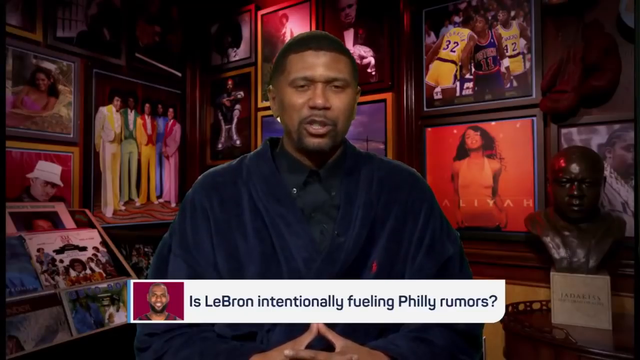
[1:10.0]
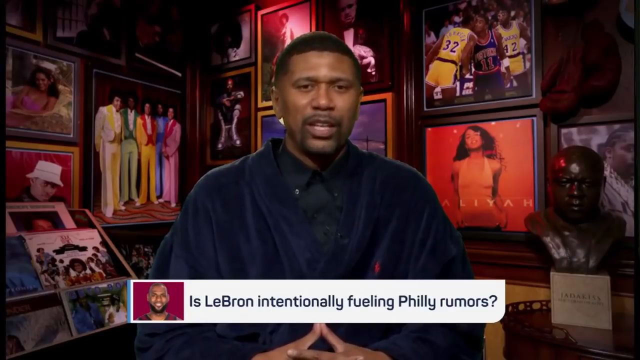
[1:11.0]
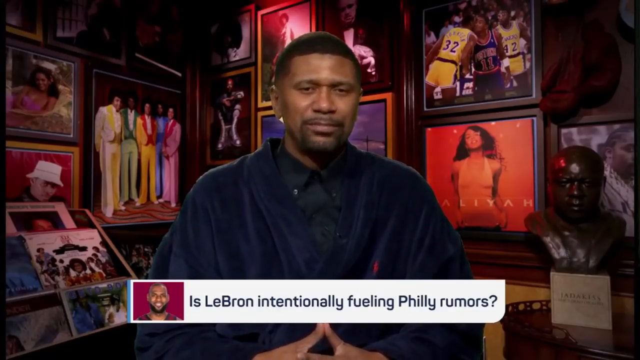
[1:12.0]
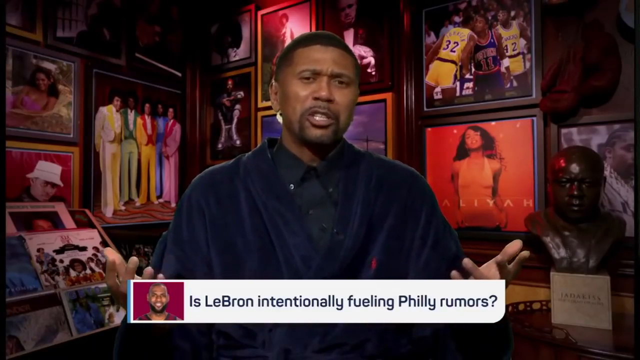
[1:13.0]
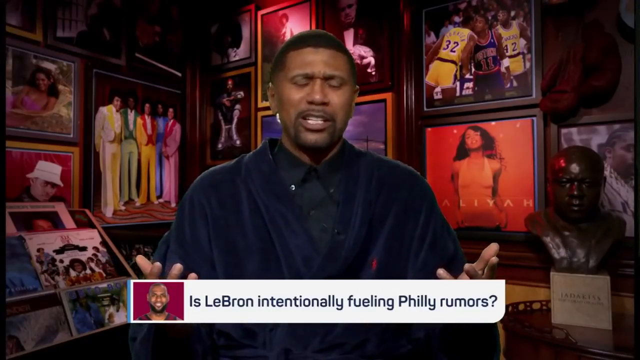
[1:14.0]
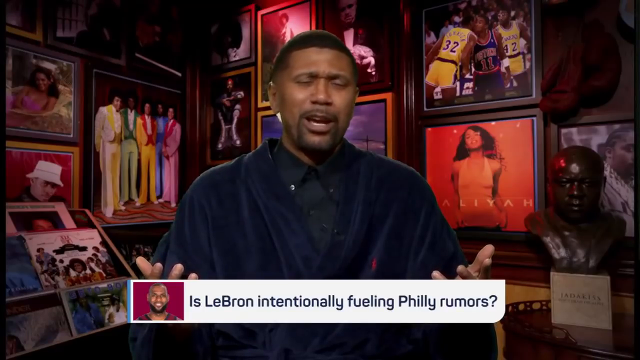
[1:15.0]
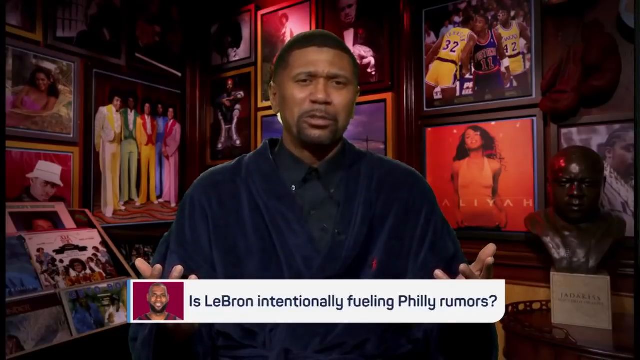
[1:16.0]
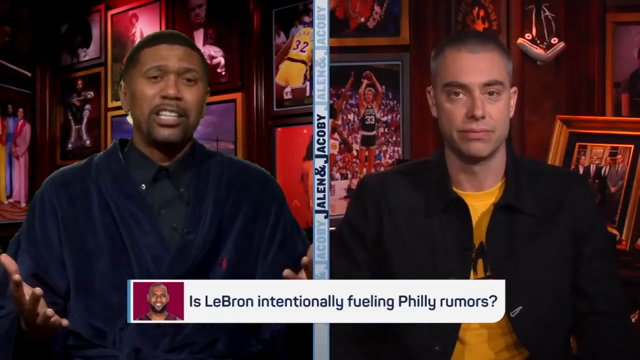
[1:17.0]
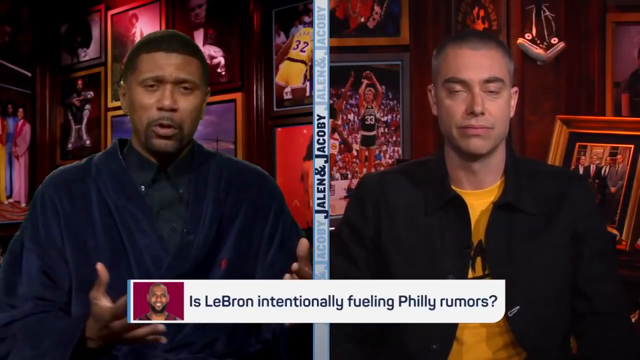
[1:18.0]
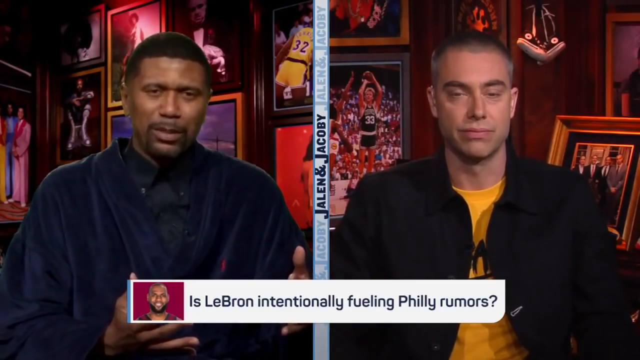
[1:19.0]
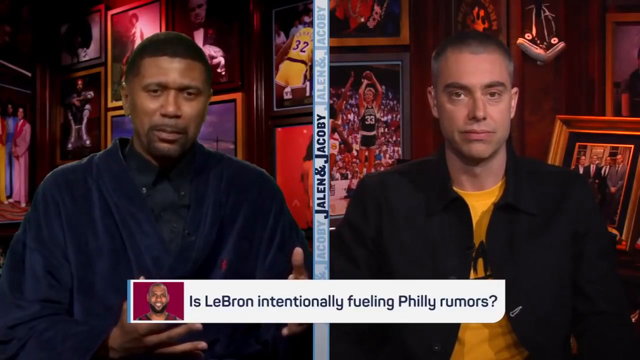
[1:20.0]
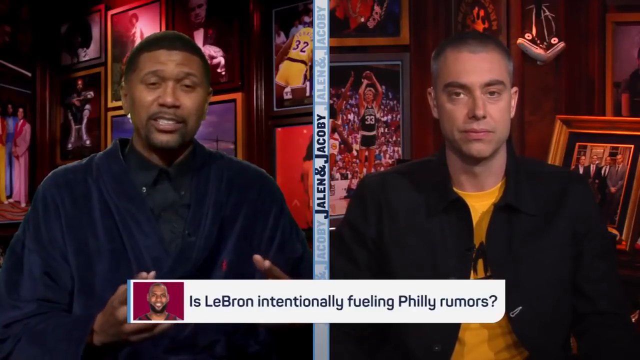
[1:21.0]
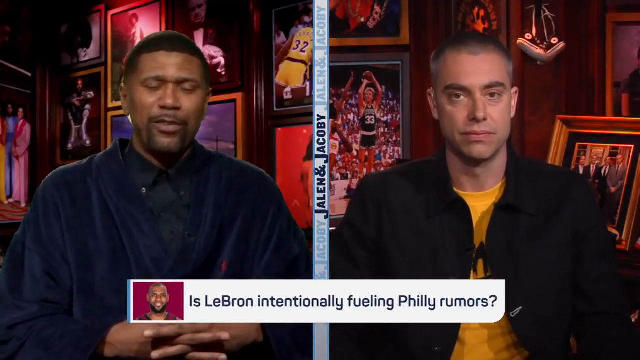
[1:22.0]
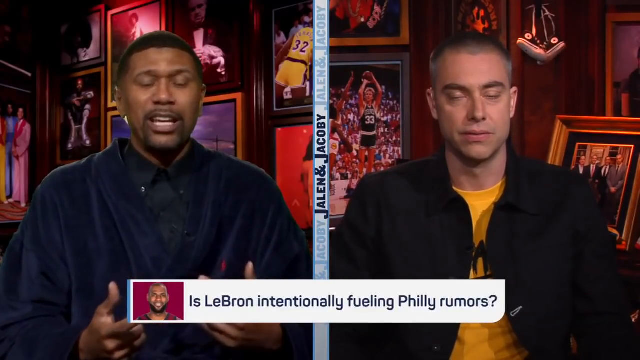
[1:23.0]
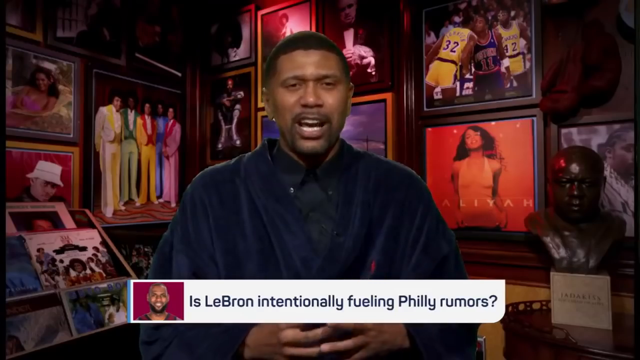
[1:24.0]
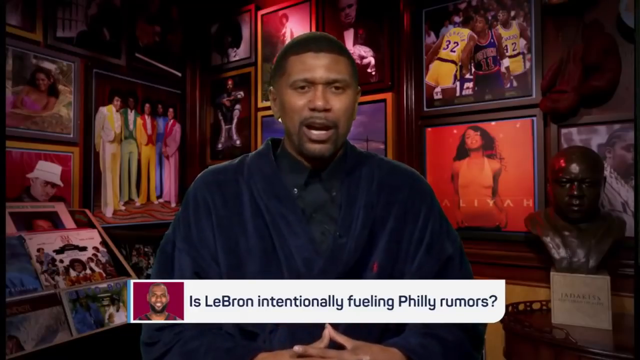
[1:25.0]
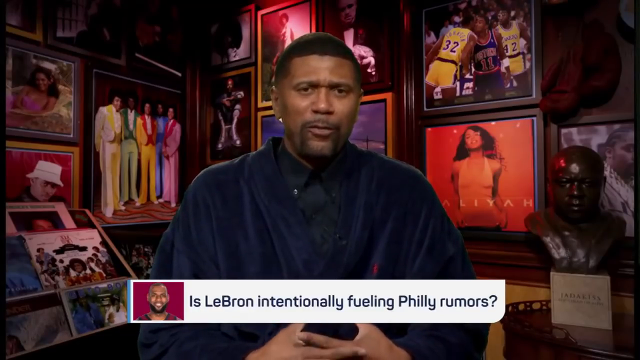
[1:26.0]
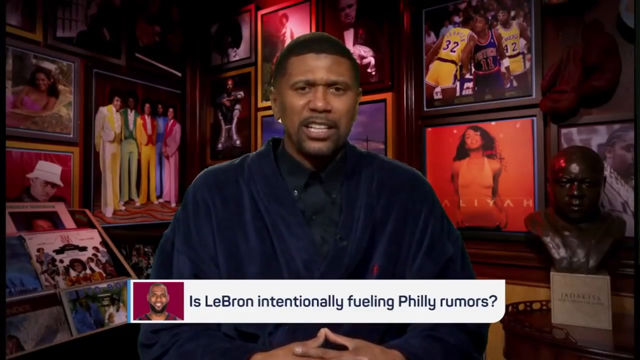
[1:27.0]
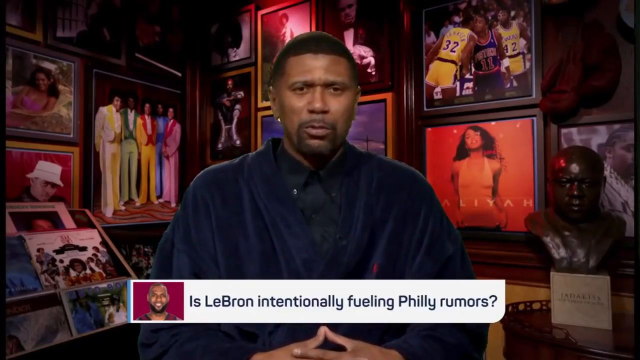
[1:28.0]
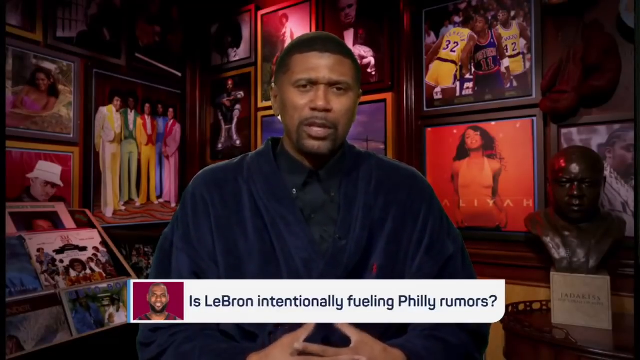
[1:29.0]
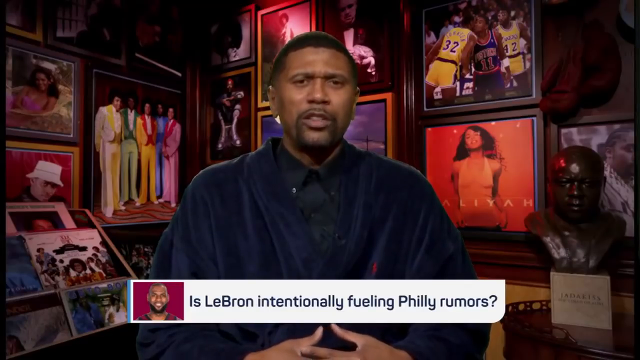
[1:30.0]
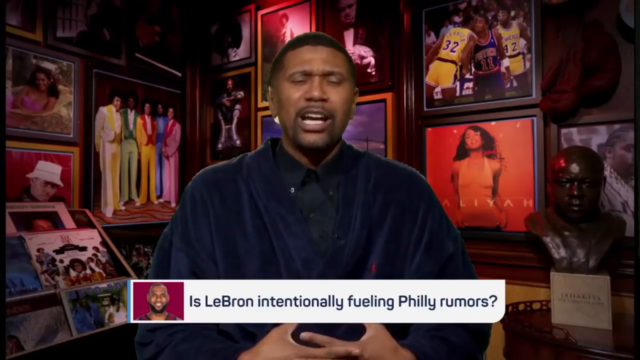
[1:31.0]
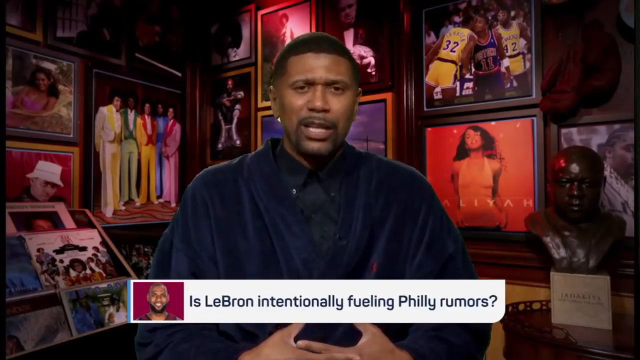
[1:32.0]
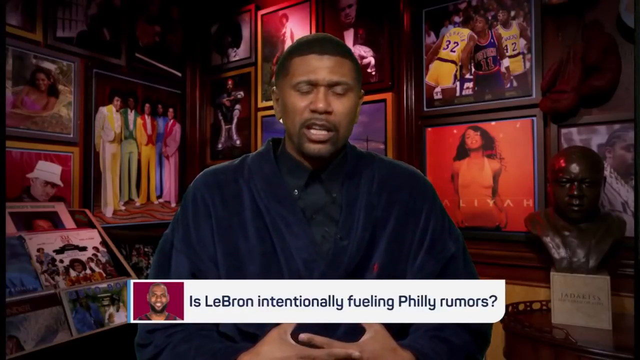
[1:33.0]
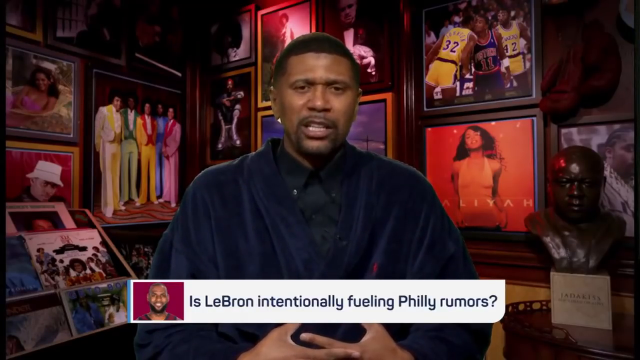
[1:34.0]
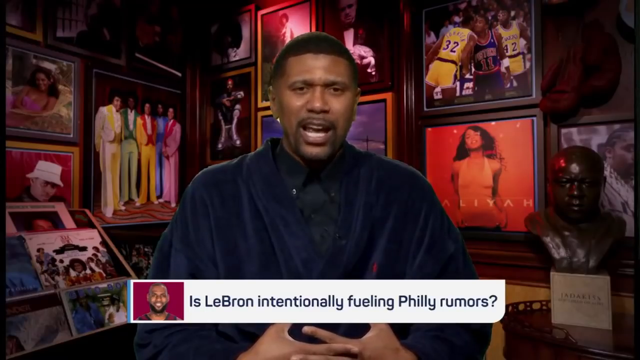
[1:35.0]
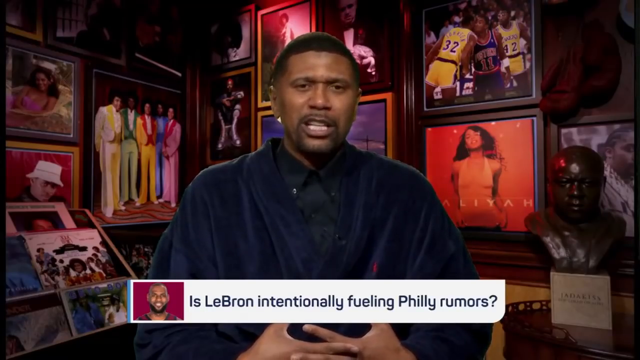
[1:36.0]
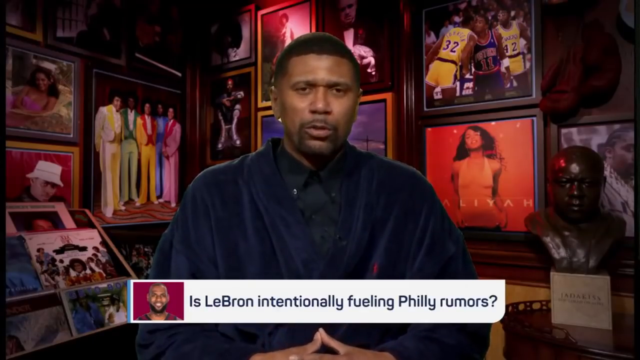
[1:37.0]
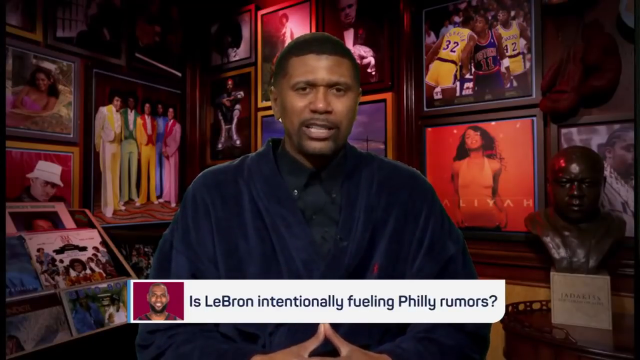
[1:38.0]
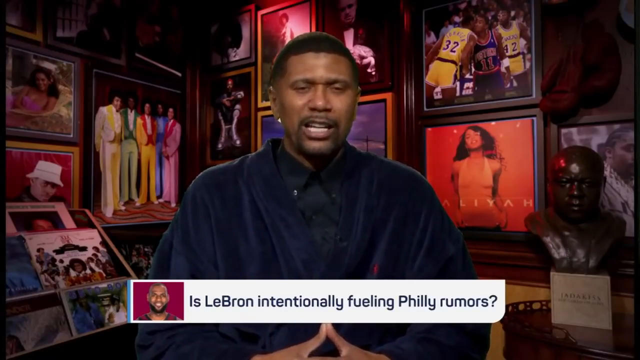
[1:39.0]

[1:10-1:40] Jalen Rose is still in the studio, and the video keeps panning back and forth between him and another man. All kinds of sports and music memorabilia are directly behind Jalen Rose, along with what appears to be some sort of lighting. He is trying to get his point across, waving his hands in the air and seeming a little emotional. The video pans out to a split screen of Jalen Rose bantering with the other man, a white man in a dark coat and what appears to be a yellow undershirt, who also has sports memorabilia behind him. Hand motions and nodding follow before the video pans back to Jalen Rose.